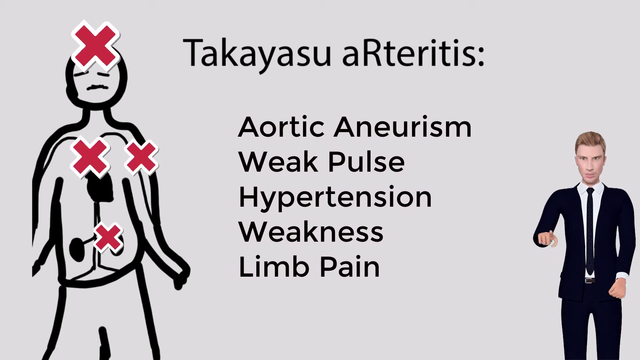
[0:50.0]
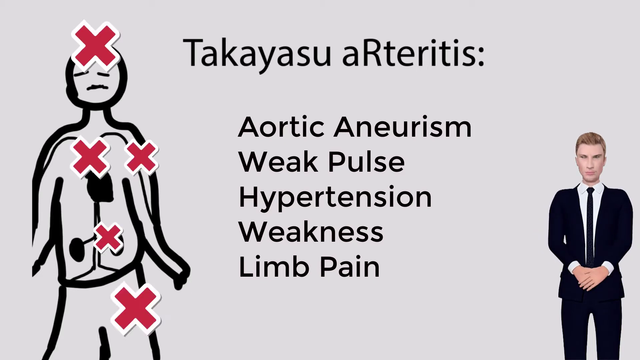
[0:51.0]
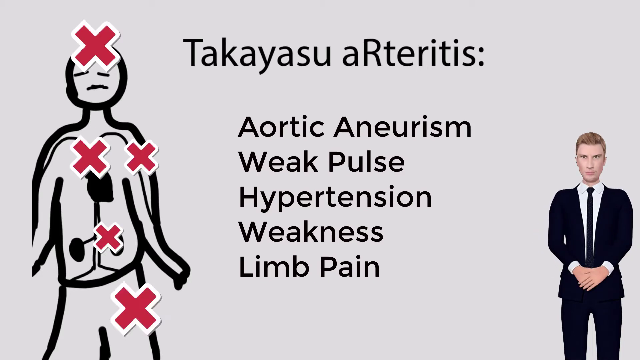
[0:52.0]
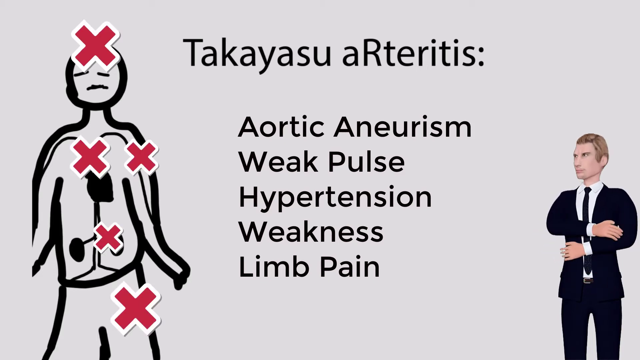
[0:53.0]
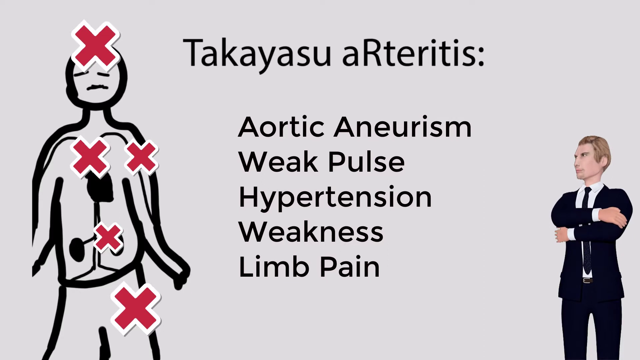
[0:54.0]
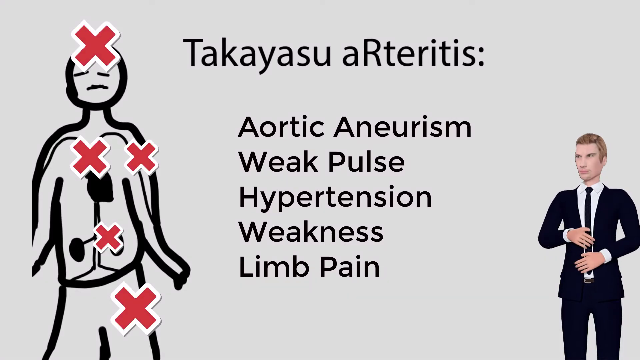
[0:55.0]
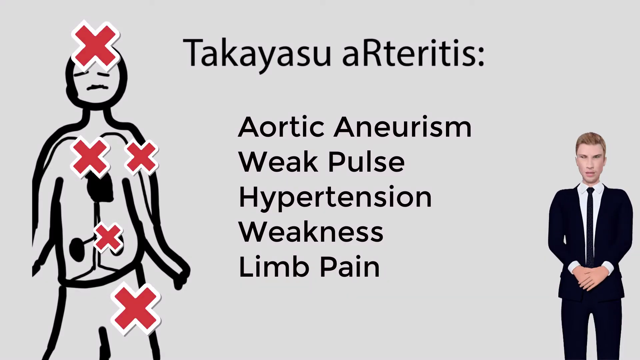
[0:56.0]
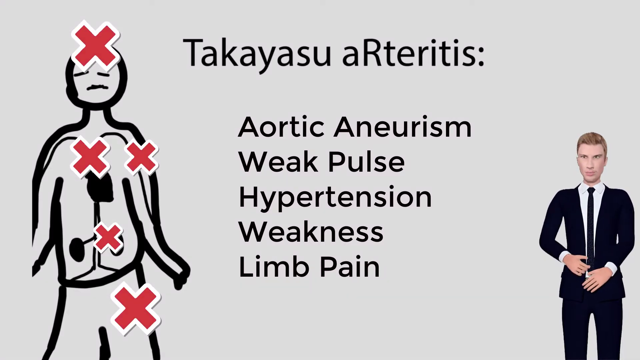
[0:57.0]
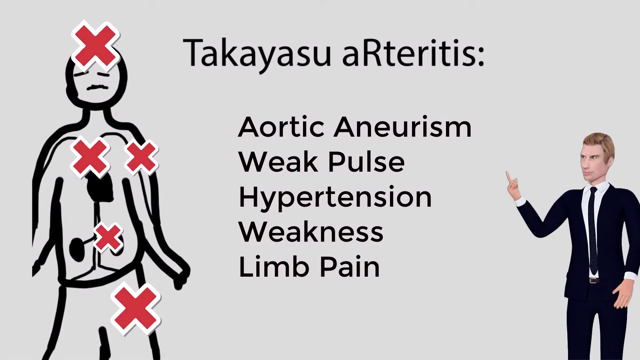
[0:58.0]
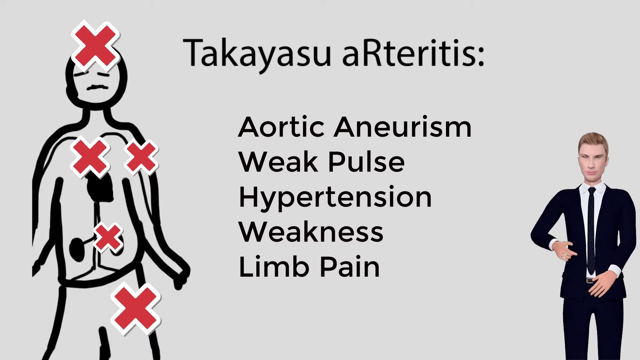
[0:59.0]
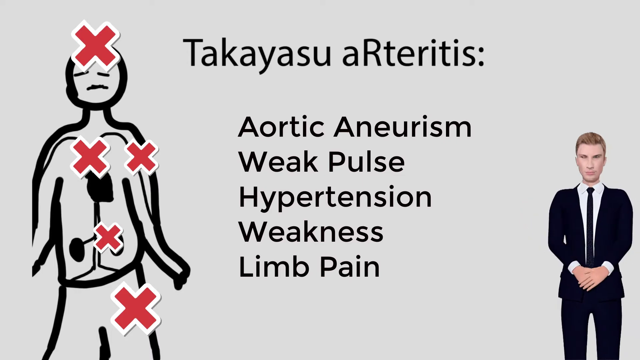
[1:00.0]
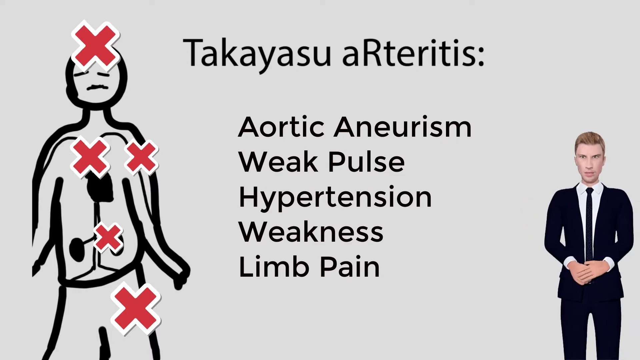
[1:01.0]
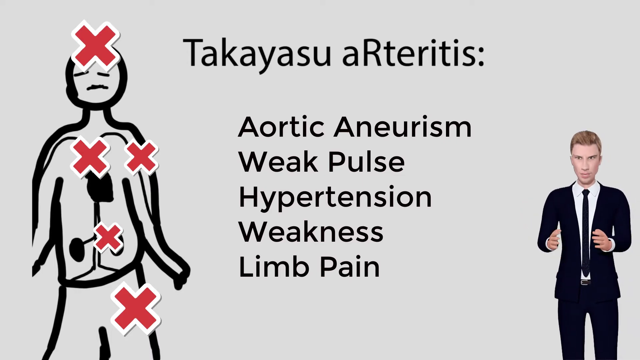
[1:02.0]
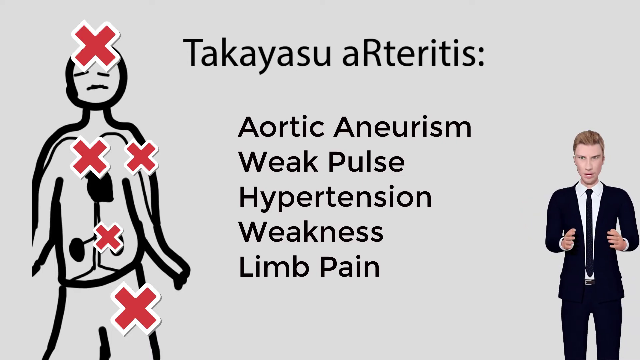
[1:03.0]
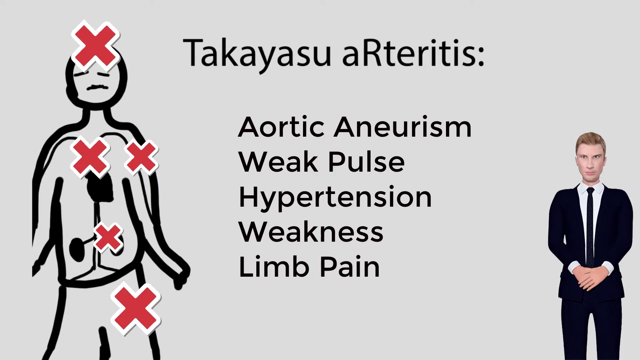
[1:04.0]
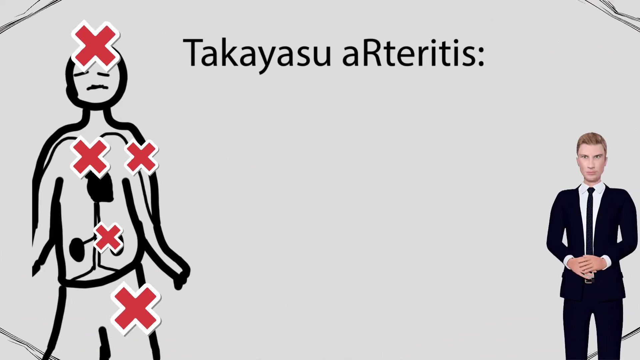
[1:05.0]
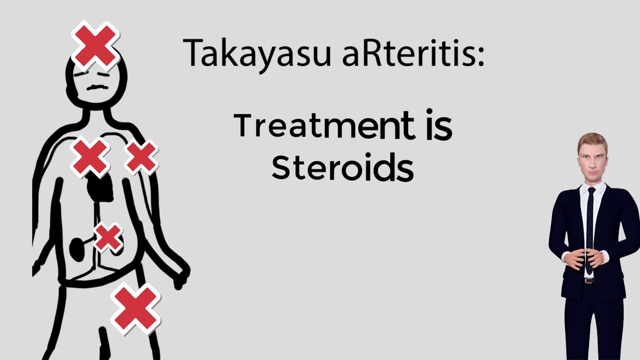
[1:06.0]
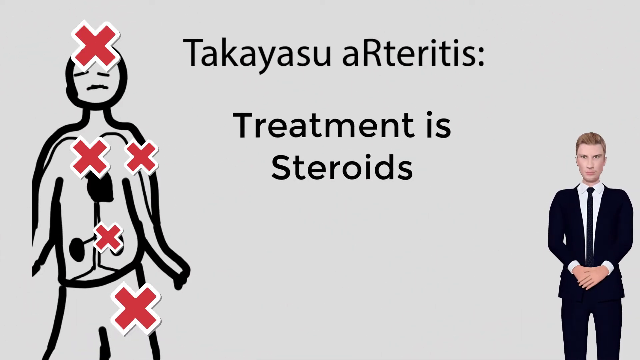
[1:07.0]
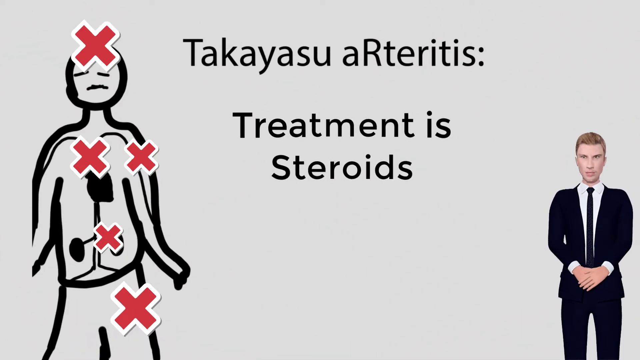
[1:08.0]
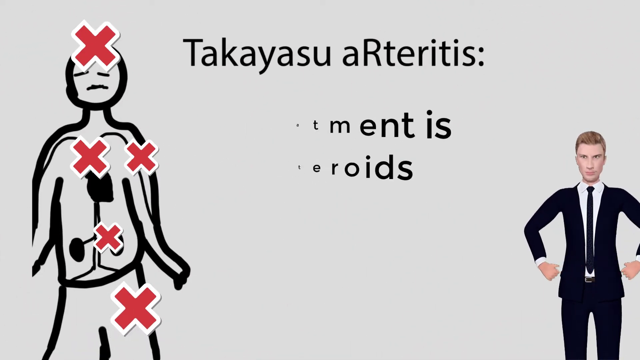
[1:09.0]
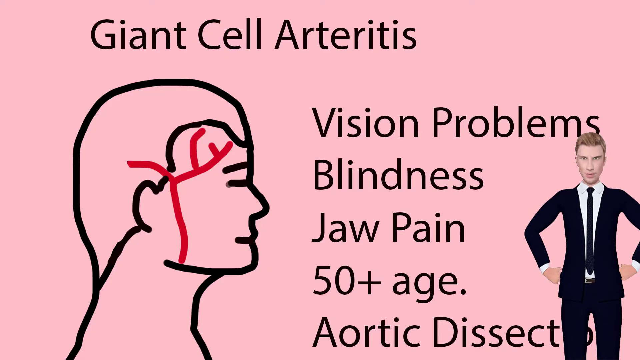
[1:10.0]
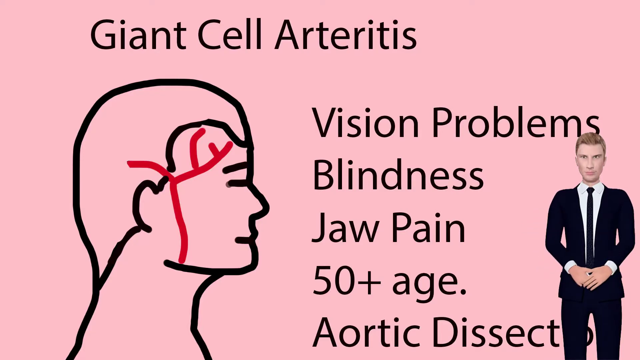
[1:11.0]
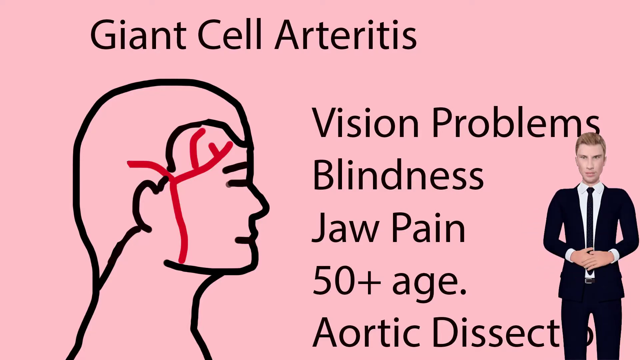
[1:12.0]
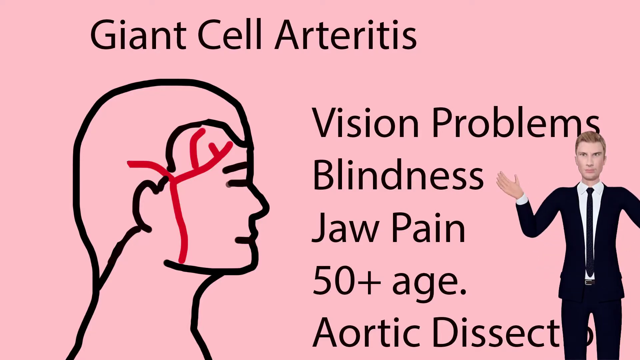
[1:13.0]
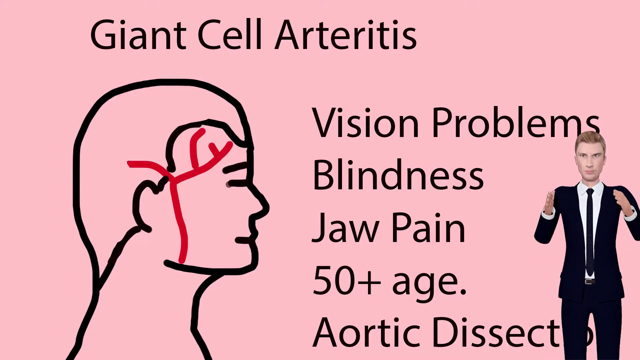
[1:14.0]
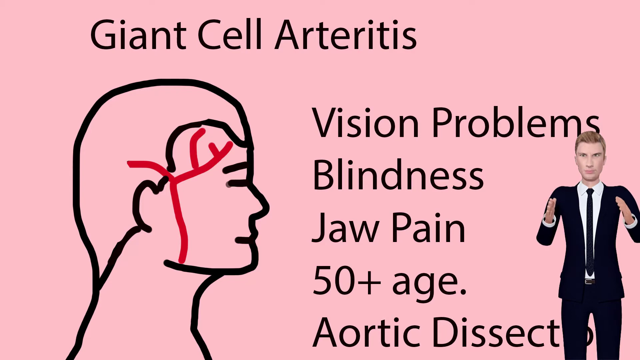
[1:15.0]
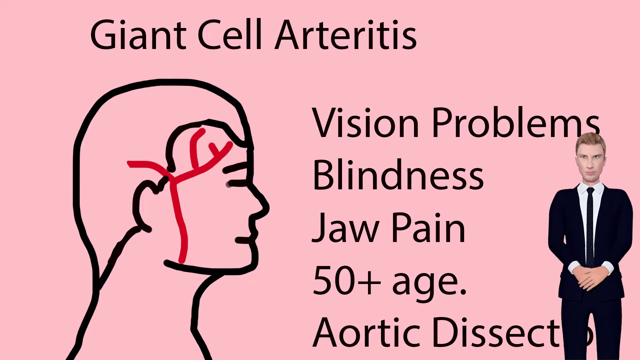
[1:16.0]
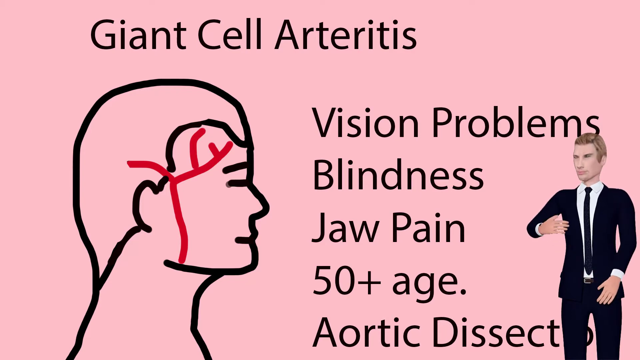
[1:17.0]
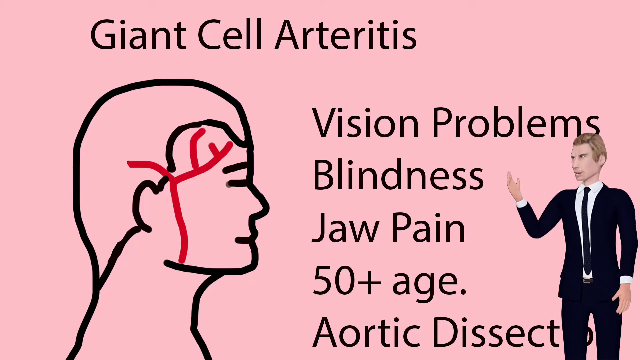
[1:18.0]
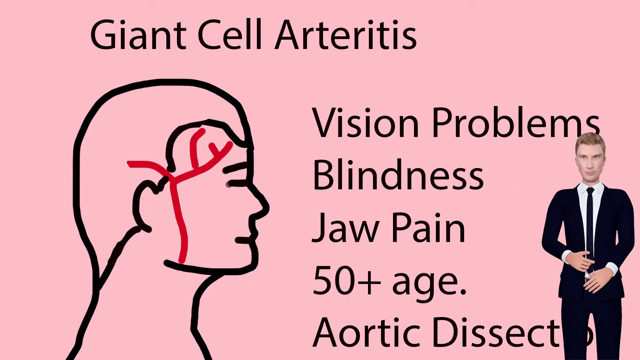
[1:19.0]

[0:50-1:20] Text lists aortic aneurysm, hypertension, weakness, and limb pain, and states that the treatment is steroids. Next, giant cell arteritis is listed with vision problems, blindness, age above 50, and aortic dissection, alongside cartoons and diagrams.